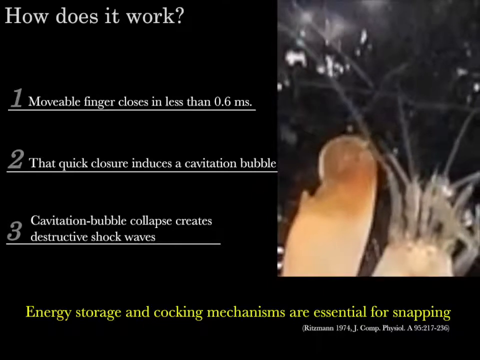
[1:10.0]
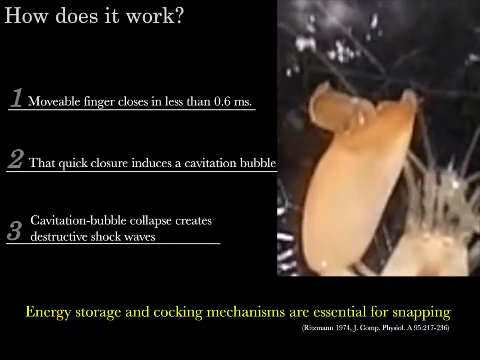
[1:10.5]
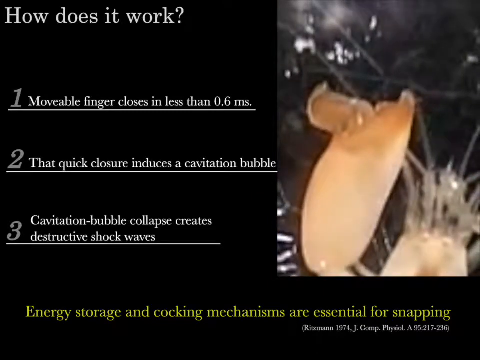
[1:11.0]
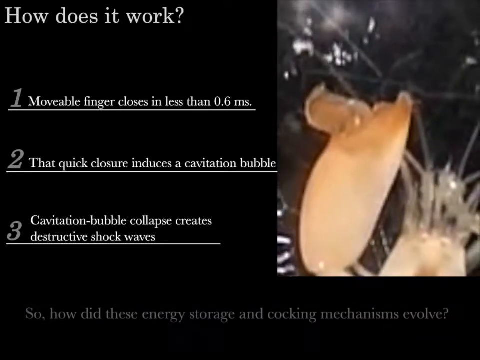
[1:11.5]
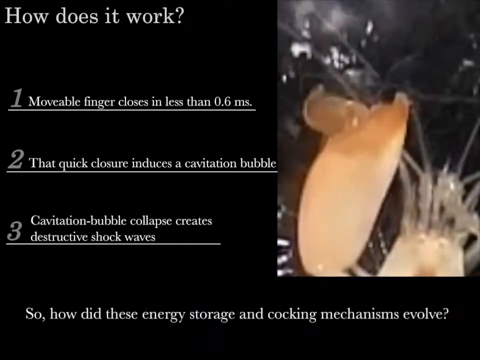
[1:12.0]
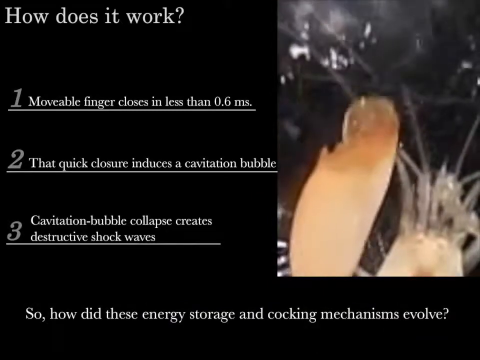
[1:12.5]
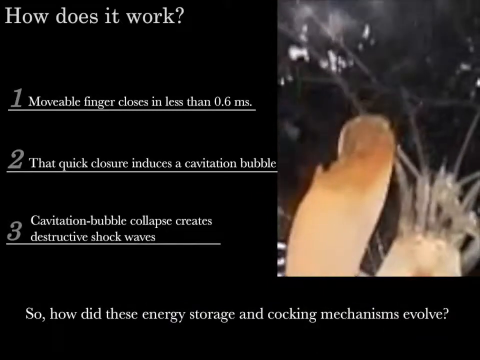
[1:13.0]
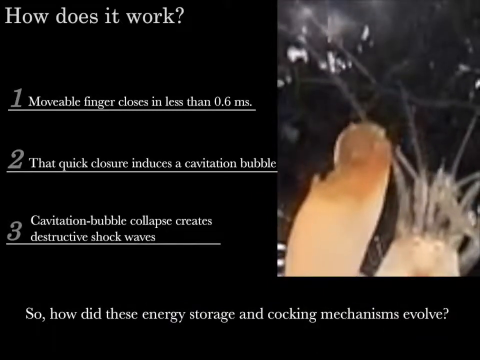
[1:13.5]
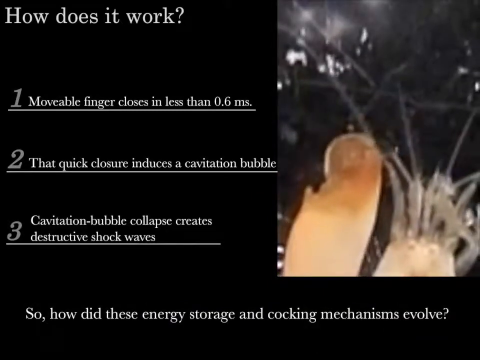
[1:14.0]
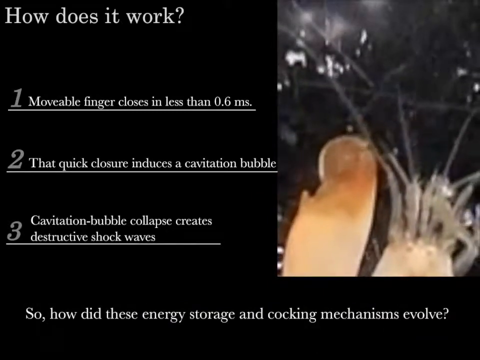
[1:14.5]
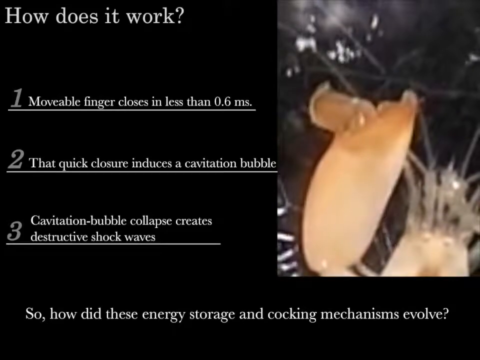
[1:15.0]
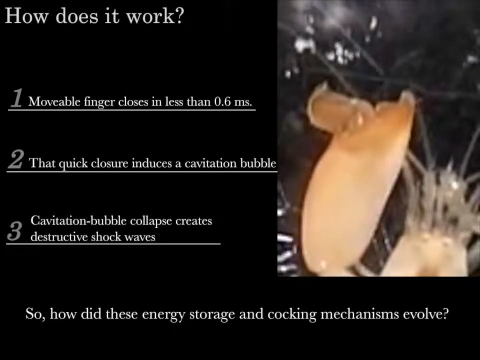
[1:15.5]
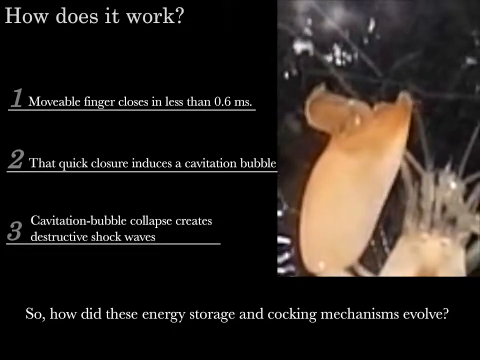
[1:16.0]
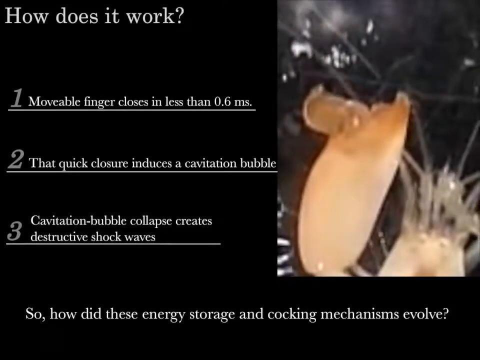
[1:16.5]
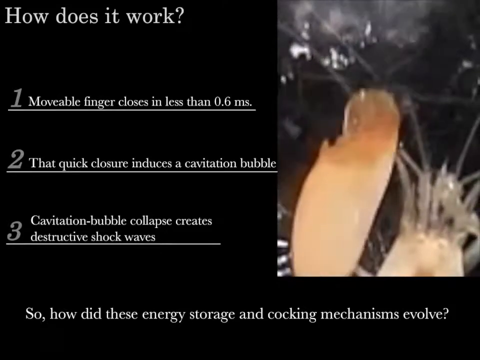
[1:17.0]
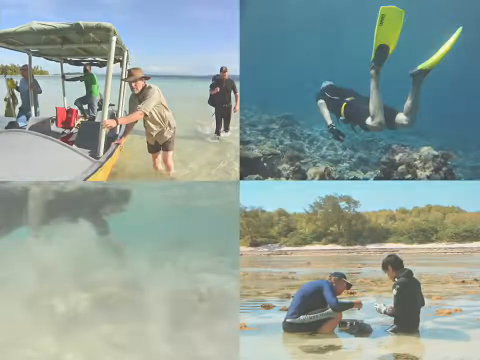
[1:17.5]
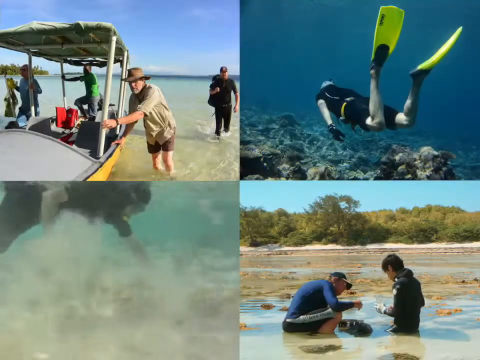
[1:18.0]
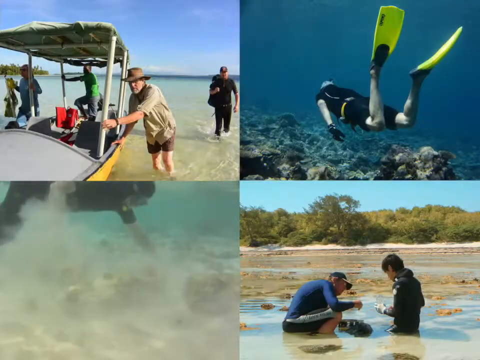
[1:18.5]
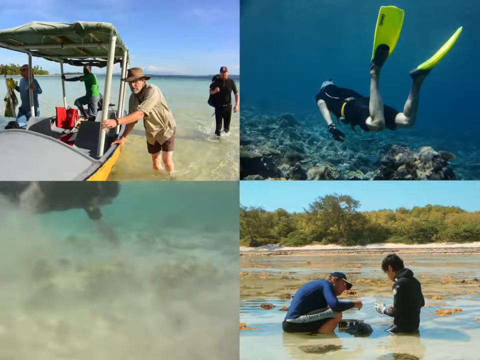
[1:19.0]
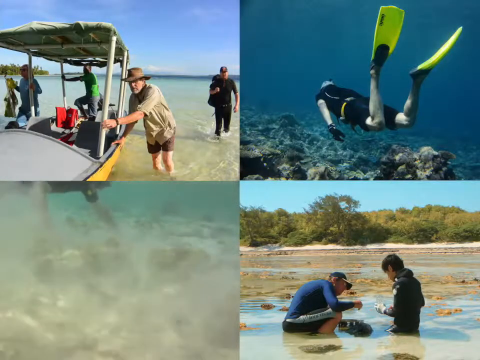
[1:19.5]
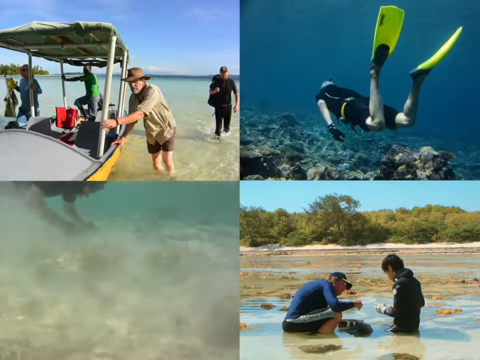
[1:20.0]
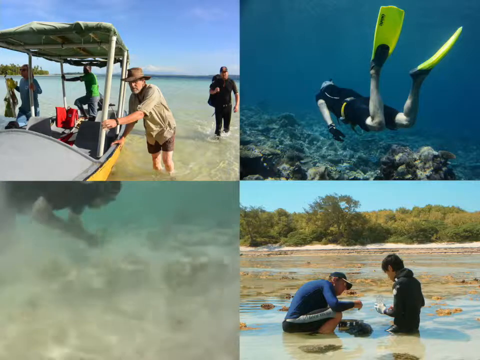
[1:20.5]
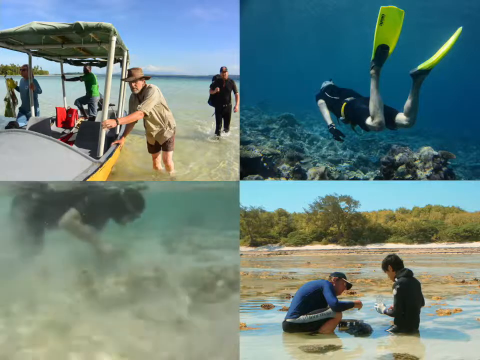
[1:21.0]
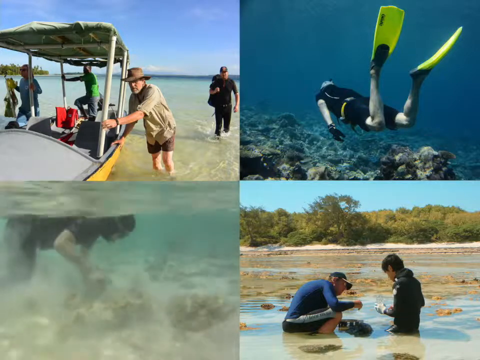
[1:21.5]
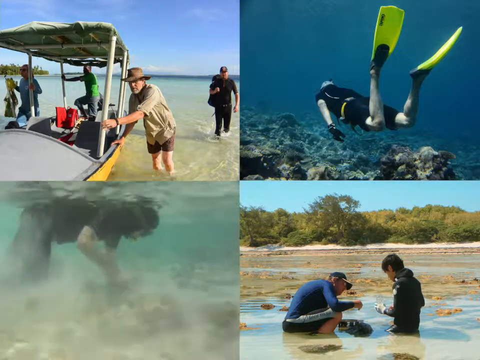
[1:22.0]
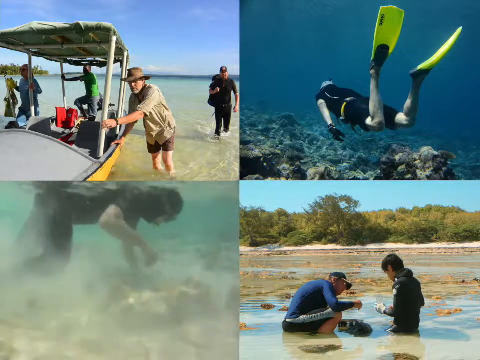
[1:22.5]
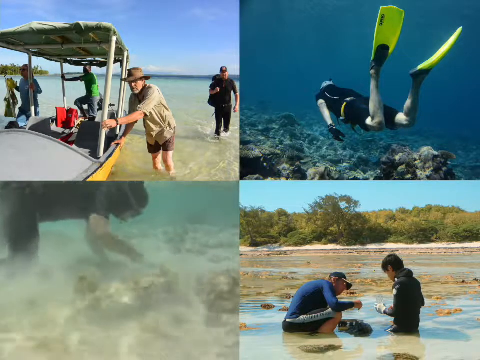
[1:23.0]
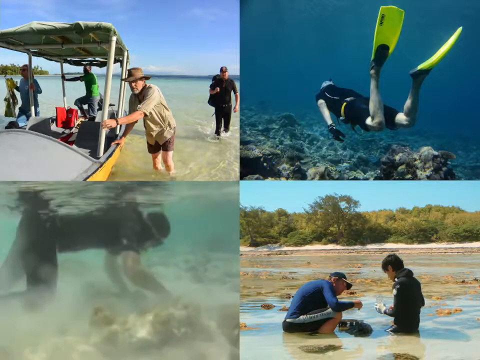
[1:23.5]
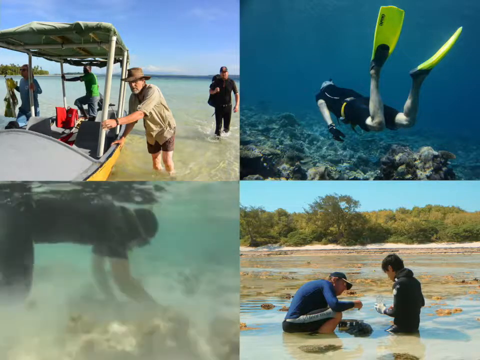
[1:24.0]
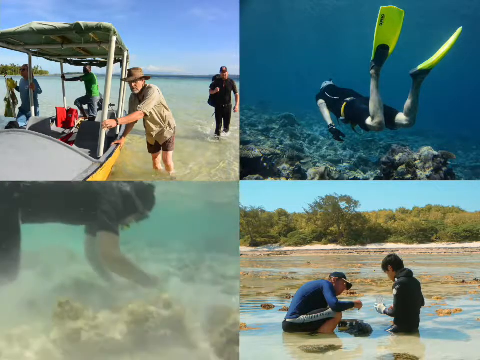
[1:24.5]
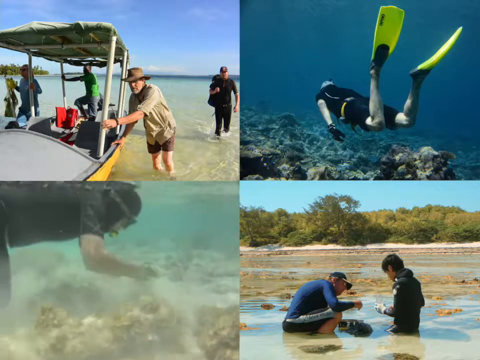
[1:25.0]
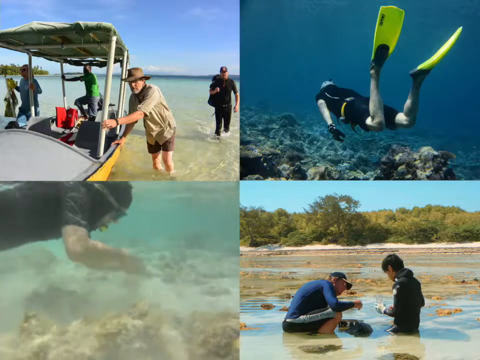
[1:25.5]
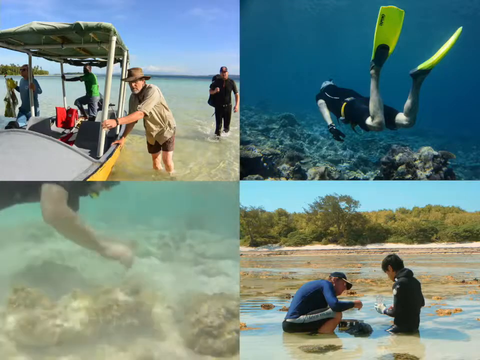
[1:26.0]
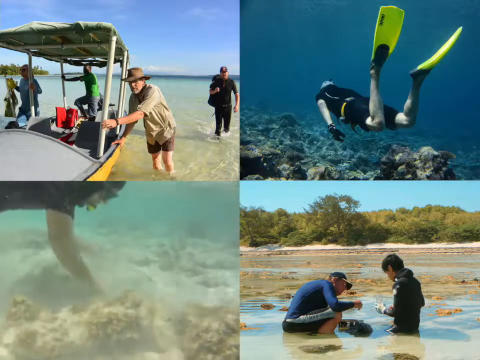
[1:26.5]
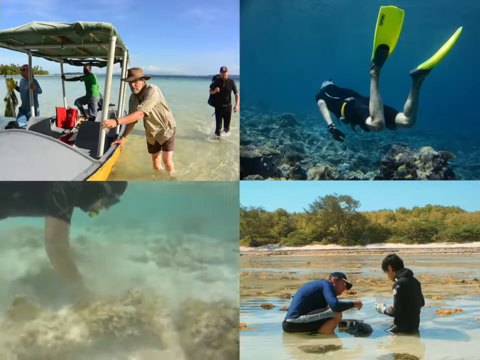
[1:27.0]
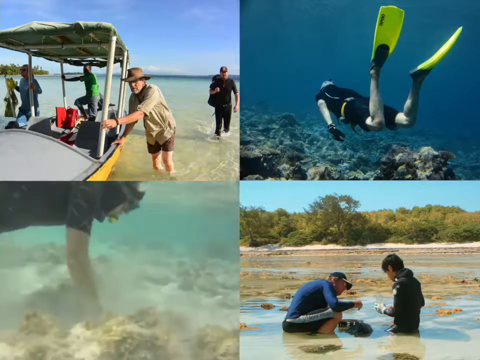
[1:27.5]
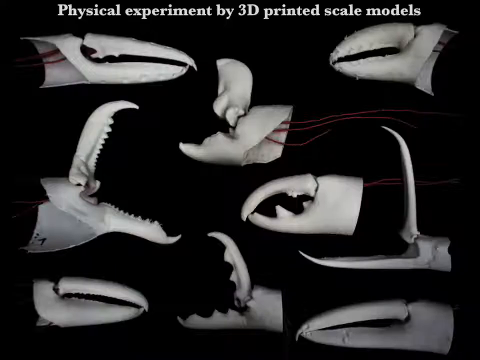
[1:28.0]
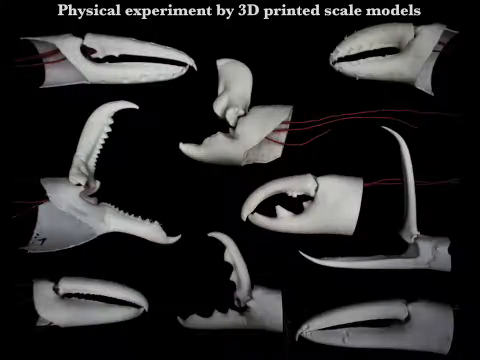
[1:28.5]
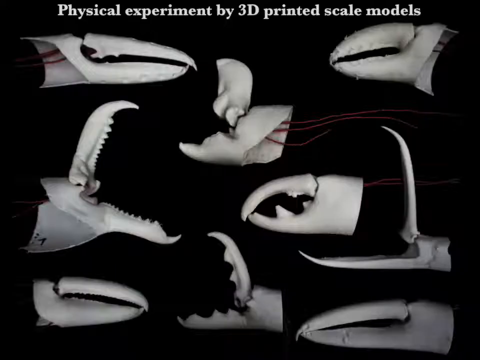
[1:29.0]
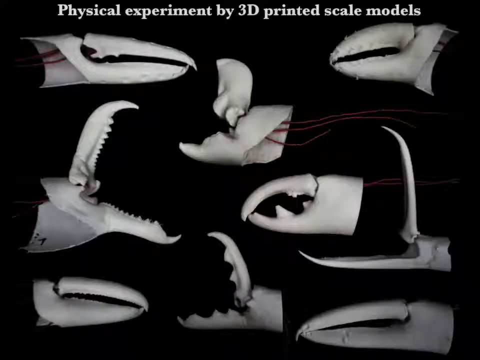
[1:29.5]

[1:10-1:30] The black left half with white lettering is still shown, with the shrimp on the right side closing its claw when something comes at it. Then a four-way split screen appears. In the top left, people push a small boat up on shore: a man on the left, a man on the right, and a person to the right in the background wading through the water, under a blue sky. In the top right is a diver whose head is to the left, deeper into the picture, with the knees toward the camera; the diver wears a black bodysuit and orange flippers and is bent at the knees with toes pointing up, rocks underneath and blue water above. In the bottom left corner, a diver at the top reaches down with her left arm, and the bottom is blurry and murky. There is also an old man on the left kneeling in front of a boy on the right, right at the edge of the shore, with trees and blue sky in the background. In the bottom left corner the diver reaches down and the dust kicks up more, then brings the hands up. The water is very shallow: the diver's back touches the surface while a hand touches the floor. Some sand on the bottom and some foliage are visible. The diver reaches down with both hands, grabs hold of something and pulls it up, but it is really blurry and hard to see. Next comes a black background with different types of pinchers: one in the top left, one in the top right, one in the left center, one in the right center, three across the bottom, and two between the four at the top. The ones down the left side point to the right, and all the others point to the left. At the top, white text reads "physical experiment by 3D printed scale models".